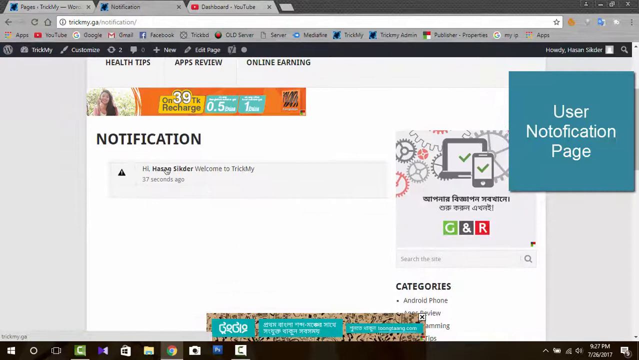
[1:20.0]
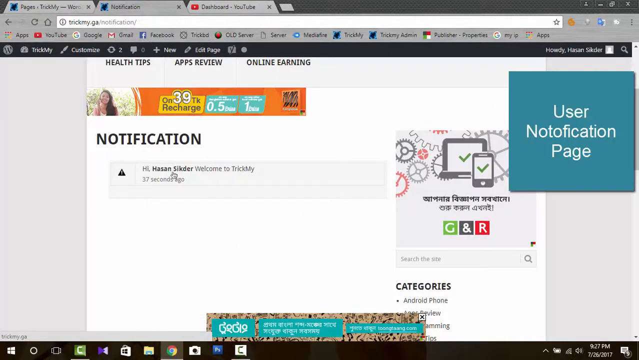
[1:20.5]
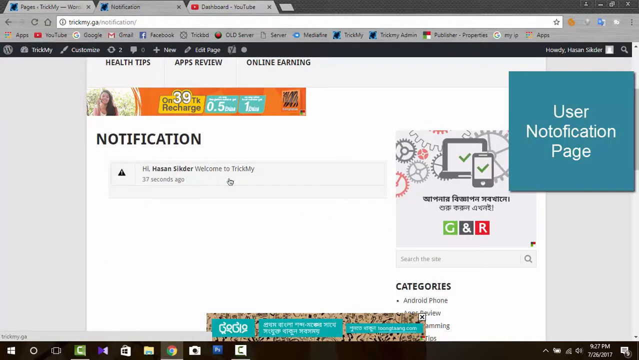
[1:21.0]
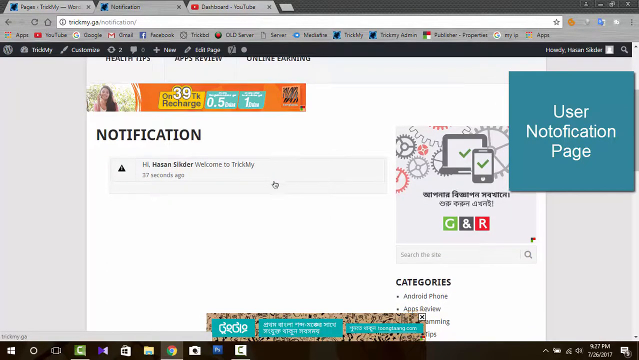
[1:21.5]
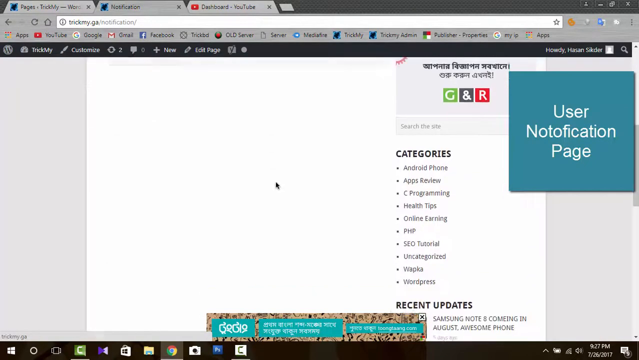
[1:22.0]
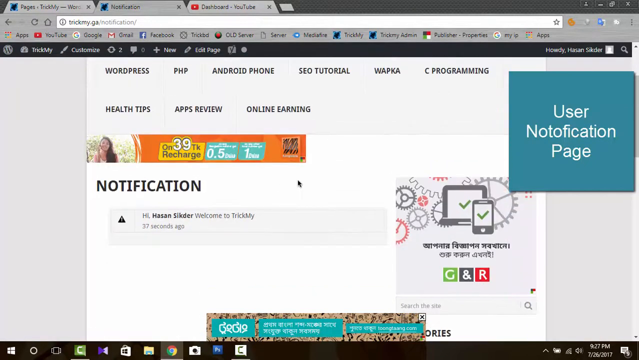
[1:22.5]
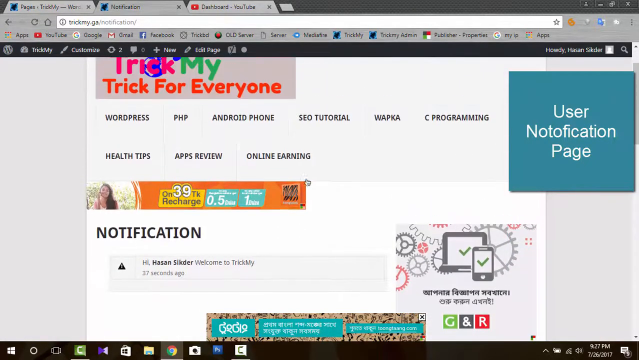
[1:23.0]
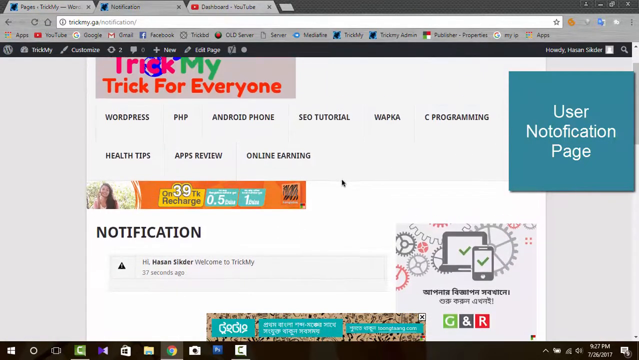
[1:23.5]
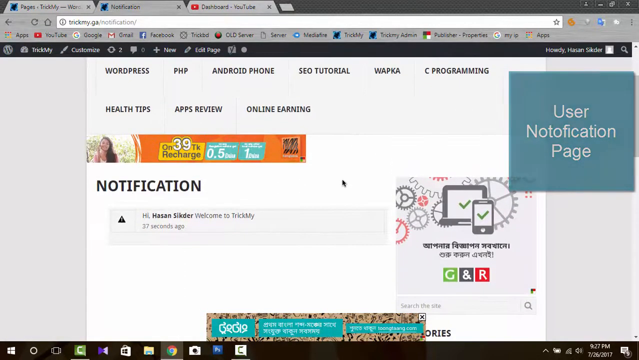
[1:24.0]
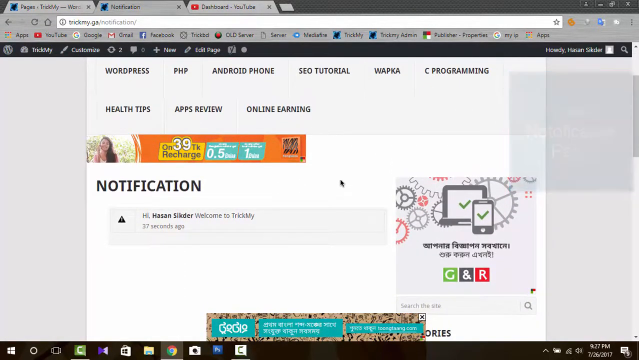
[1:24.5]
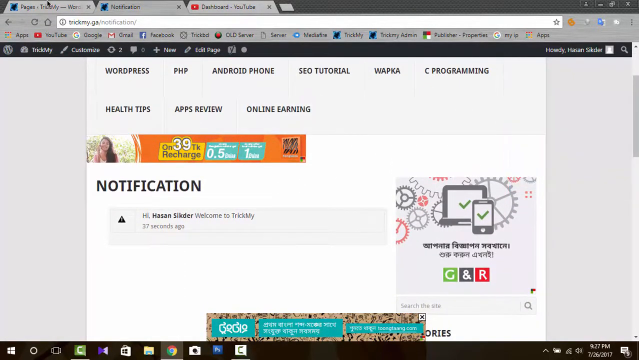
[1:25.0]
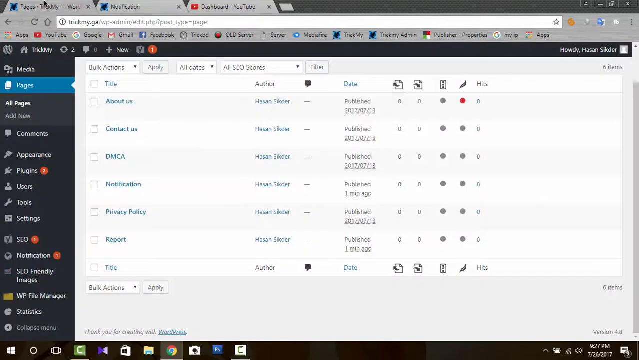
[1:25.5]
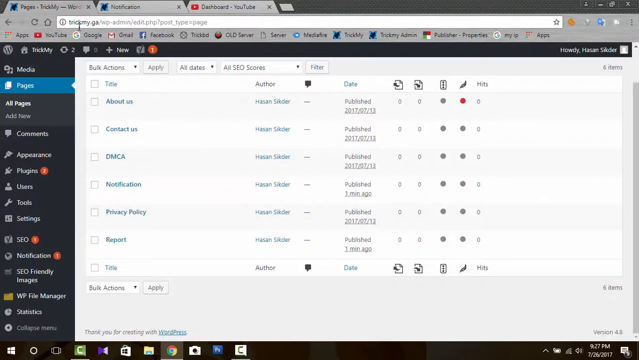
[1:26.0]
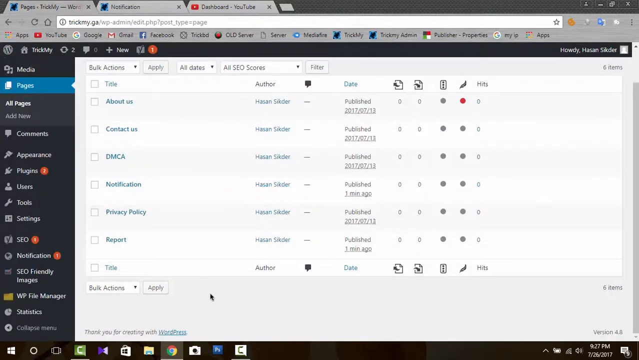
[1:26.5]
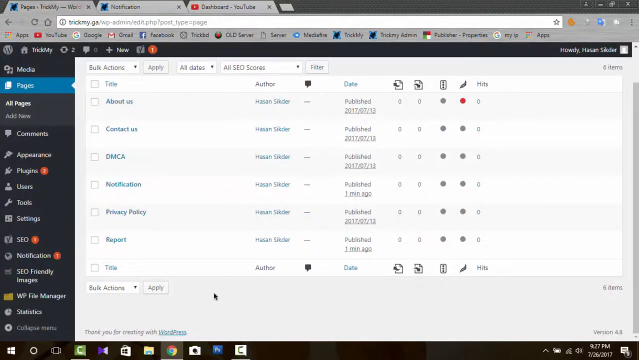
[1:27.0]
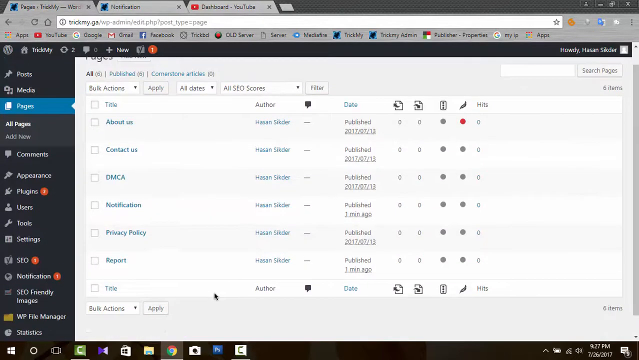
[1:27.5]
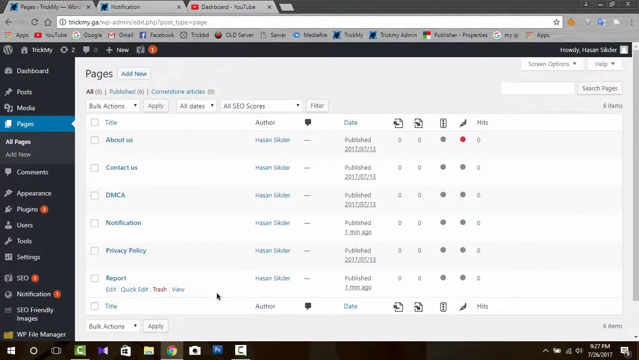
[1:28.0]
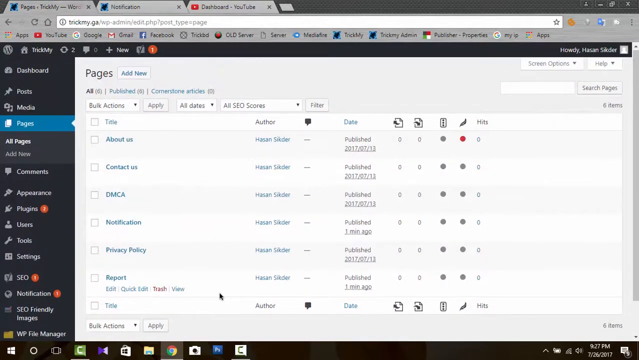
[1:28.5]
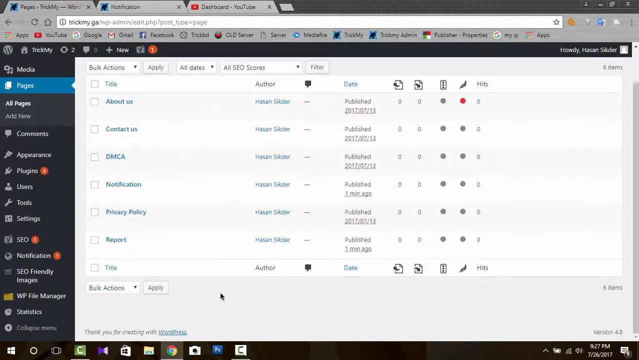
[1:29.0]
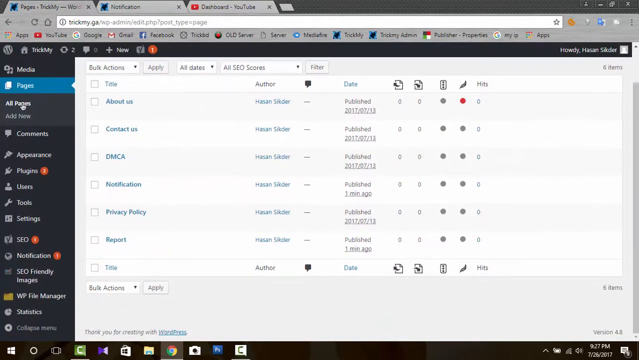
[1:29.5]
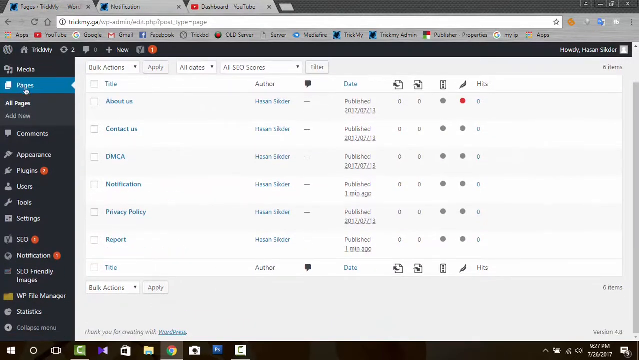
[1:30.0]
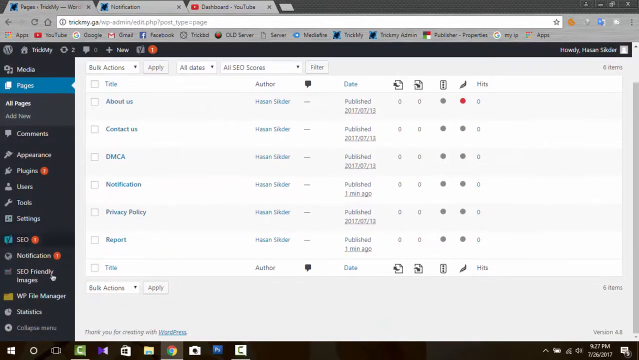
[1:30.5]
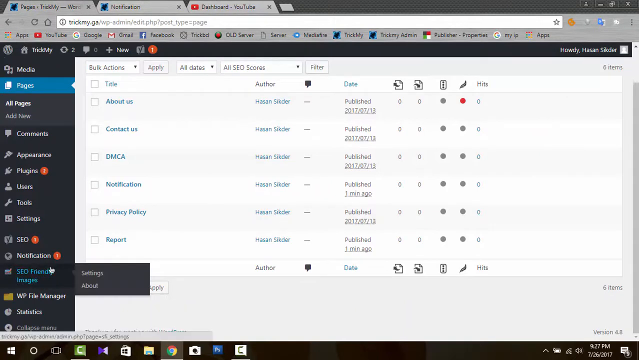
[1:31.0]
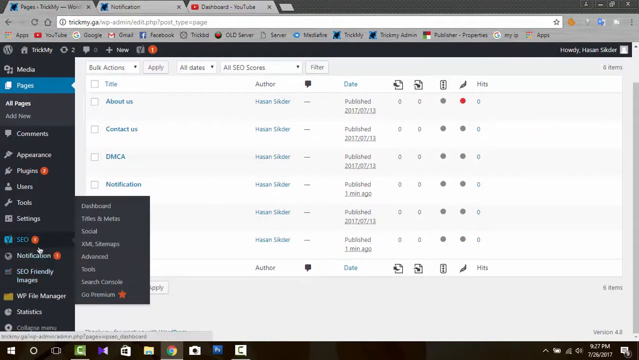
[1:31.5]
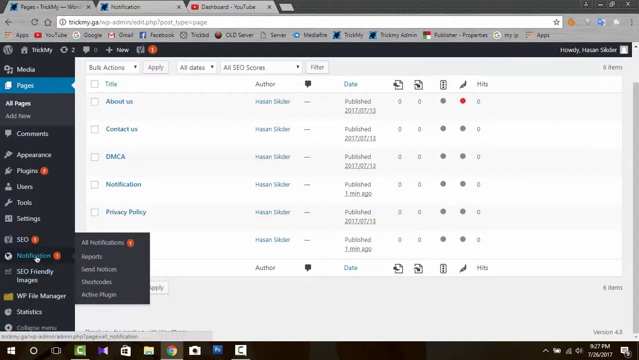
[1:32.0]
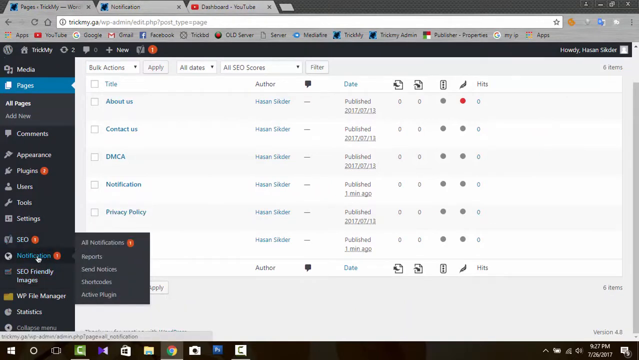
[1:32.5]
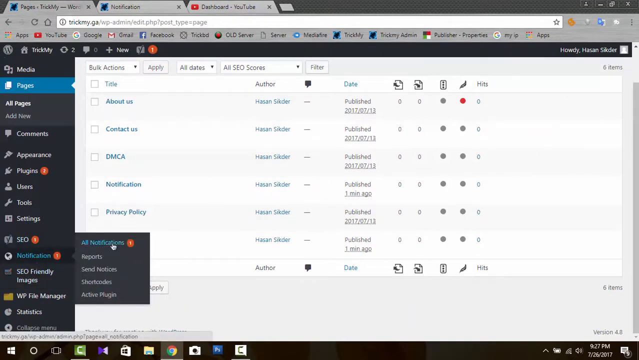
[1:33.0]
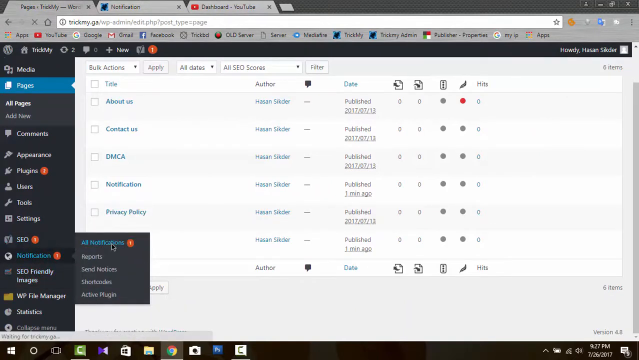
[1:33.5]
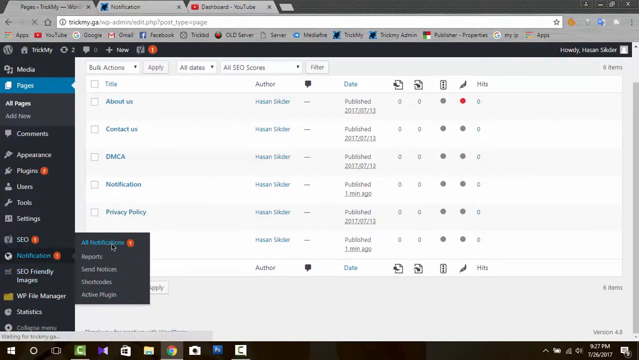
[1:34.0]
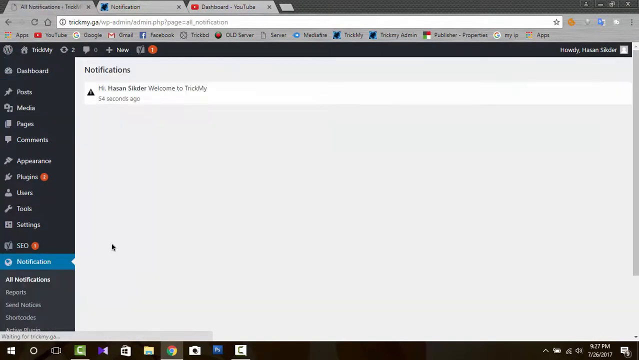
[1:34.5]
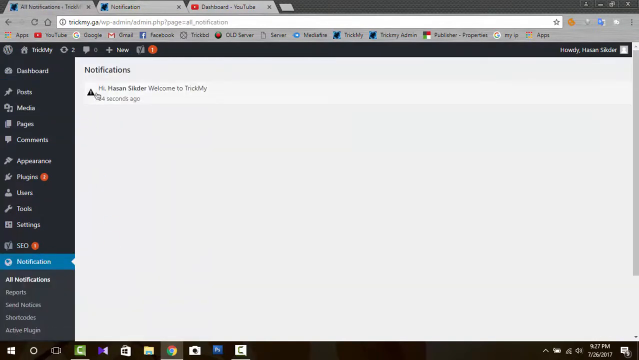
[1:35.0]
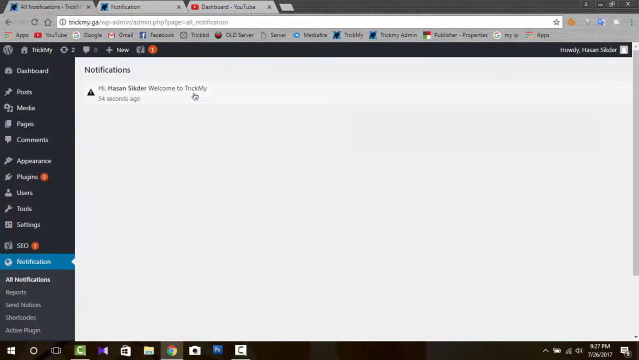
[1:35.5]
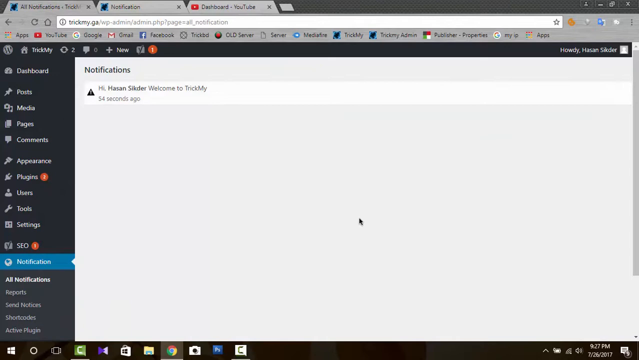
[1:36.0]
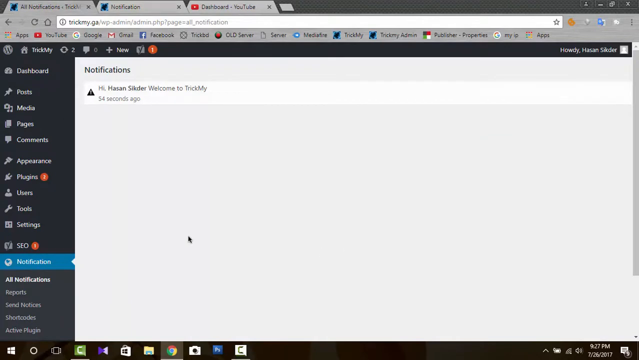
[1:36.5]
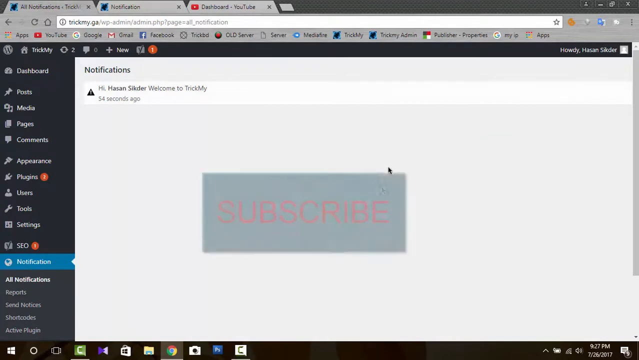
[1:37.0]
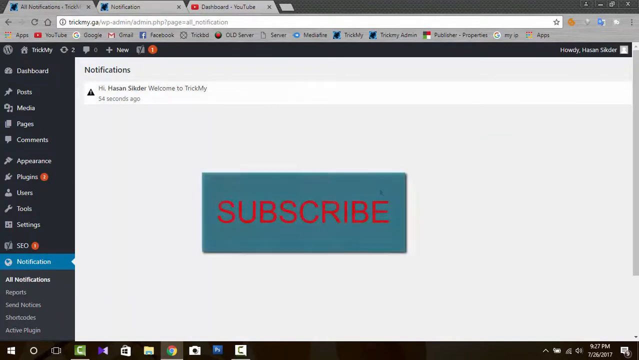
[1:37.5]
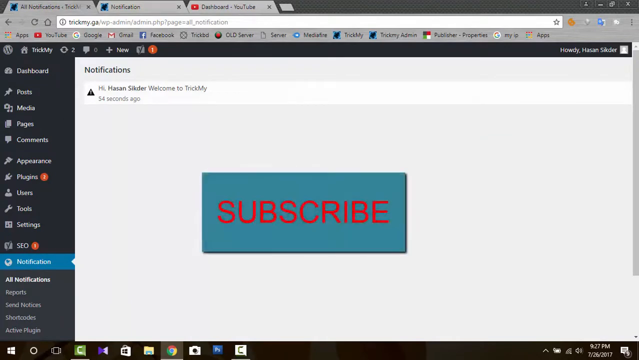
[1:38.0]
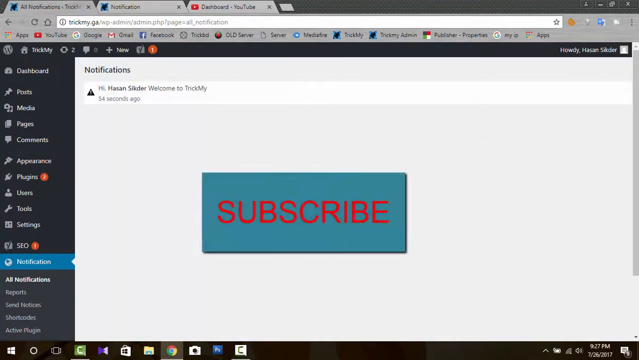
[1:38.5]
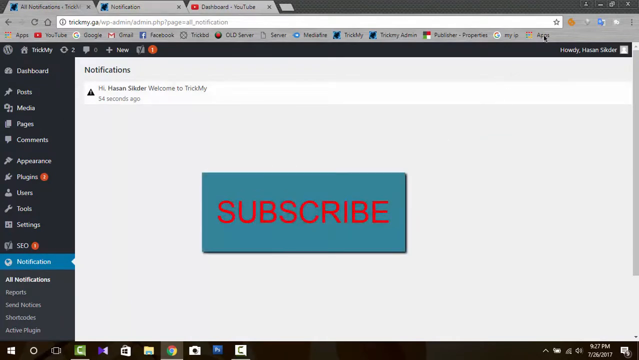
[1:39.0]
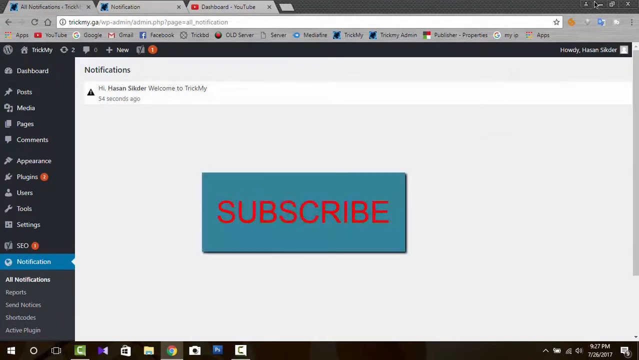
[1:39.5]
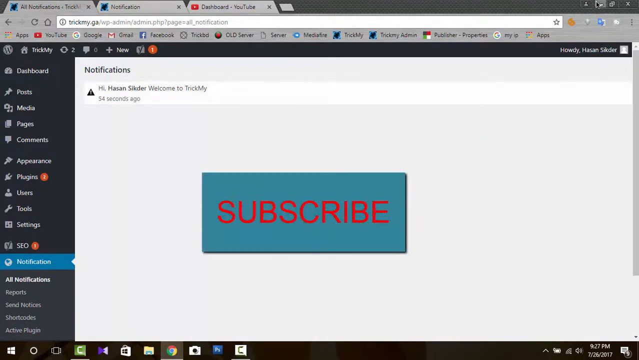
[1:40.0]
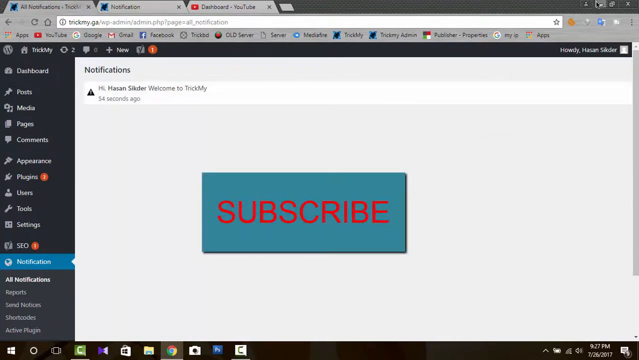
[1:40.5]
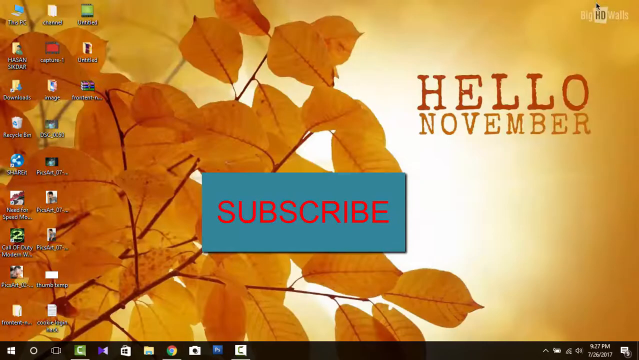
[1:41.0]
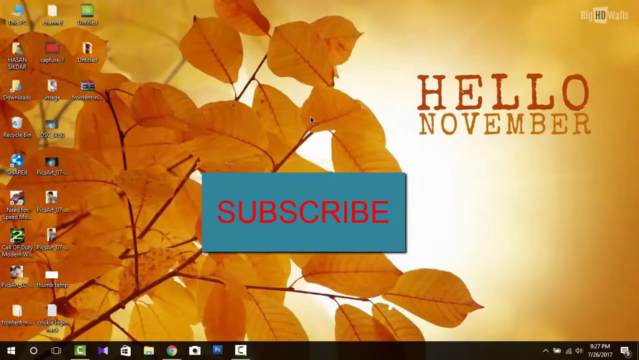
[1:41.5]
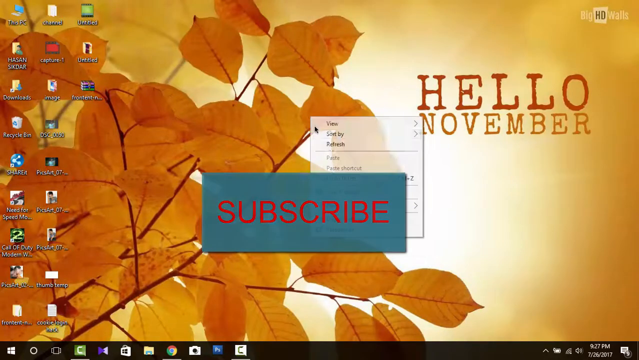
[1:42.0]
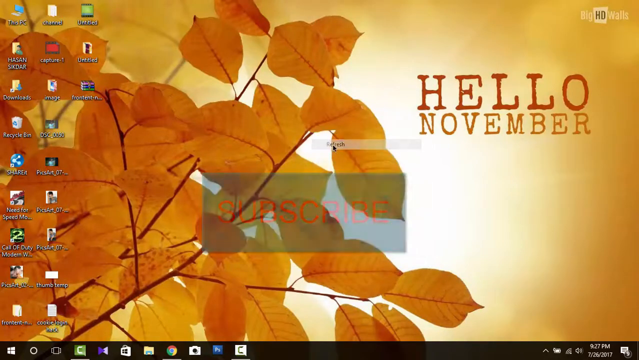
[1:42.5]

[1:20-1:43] The user scrolls down the webpage and then back up. On the left, the word "notification" appears in a black font, along with a notification section that says "hi Hasan Sikder welcome to trick mine", marked as 37 seconds ago. The user selects the first tab in the top left corner; the cursor moves down and then up, and they browse through the options on the left, selecting notifications and then all notifications, and look at their notifications. A subscribe button pops up in the center. The cursor moves to the top right corner, and the user selects minimize. The window minimizes, showing the user's desktop again with the files on the left side. They right-click, a menu pops up, and they click refresh, and the desktop refreshes.